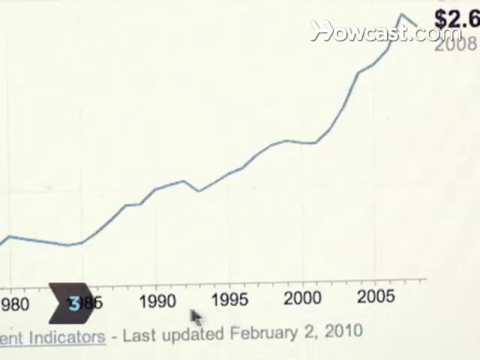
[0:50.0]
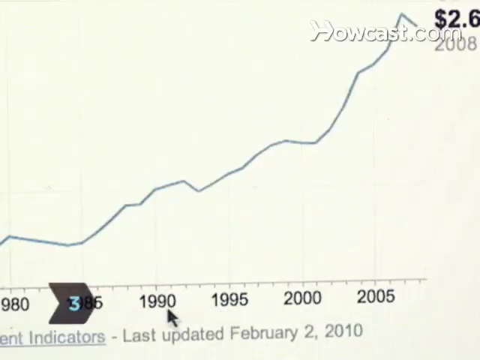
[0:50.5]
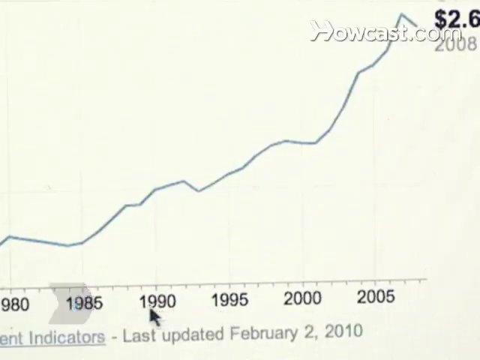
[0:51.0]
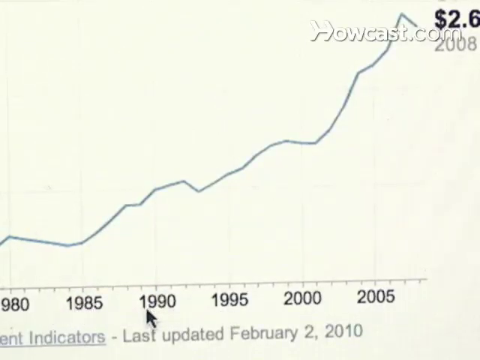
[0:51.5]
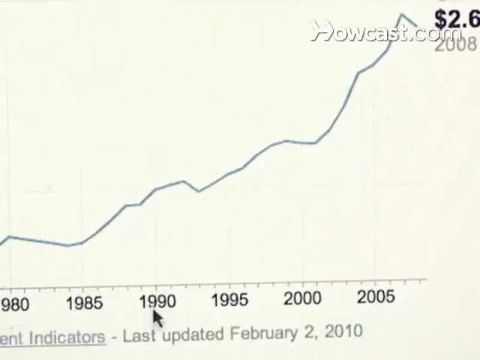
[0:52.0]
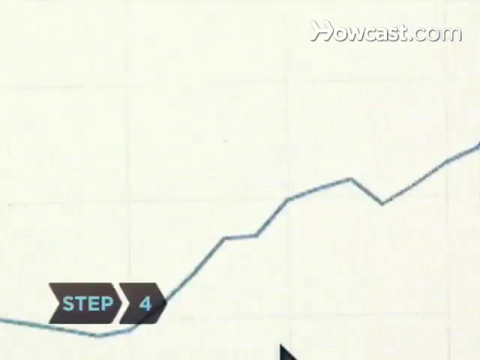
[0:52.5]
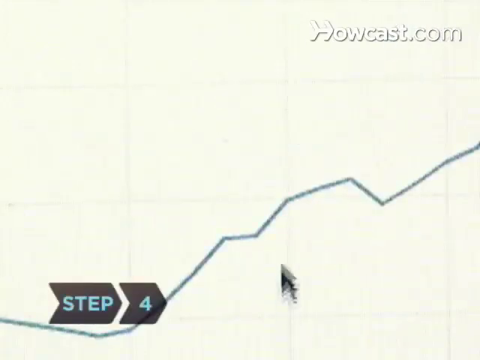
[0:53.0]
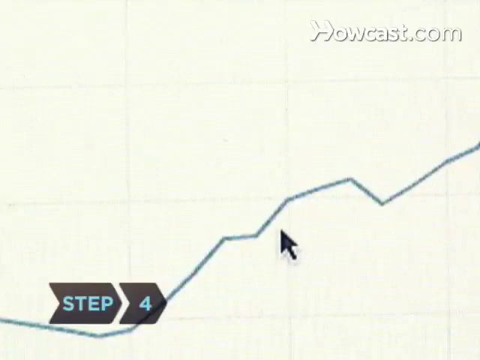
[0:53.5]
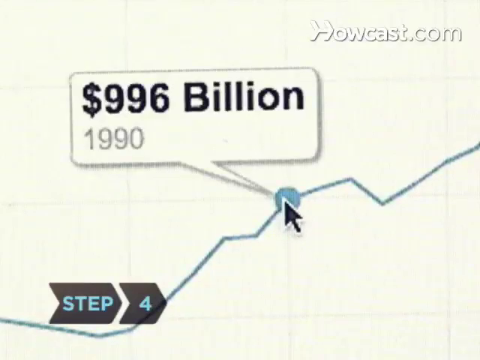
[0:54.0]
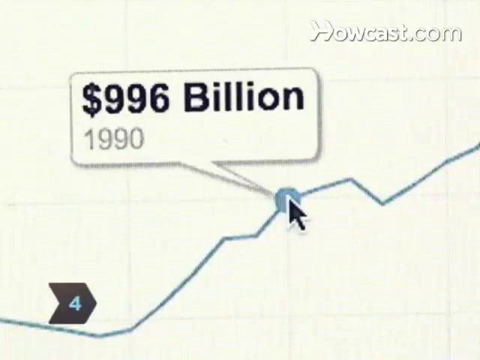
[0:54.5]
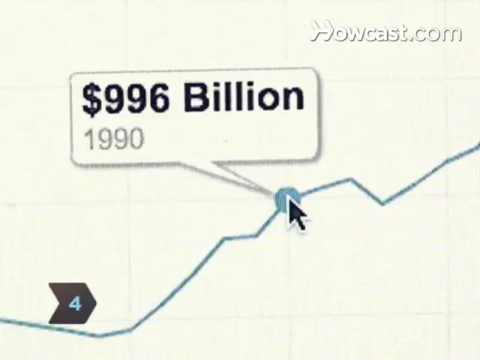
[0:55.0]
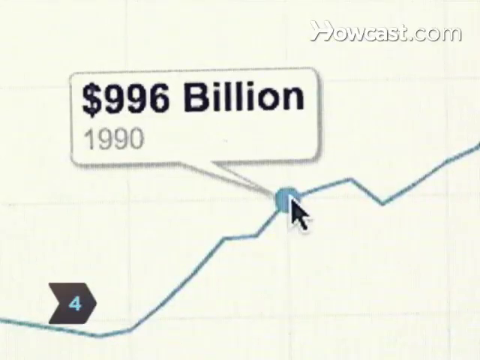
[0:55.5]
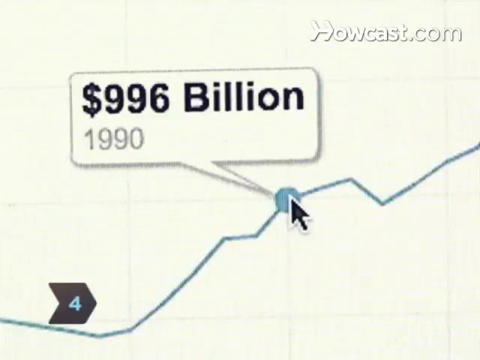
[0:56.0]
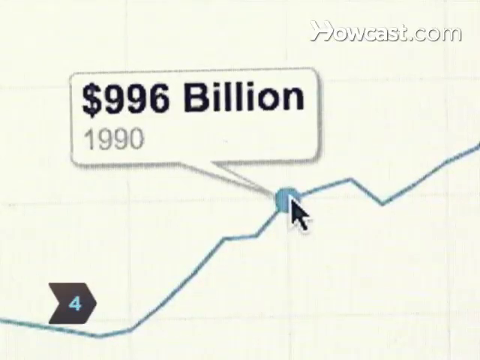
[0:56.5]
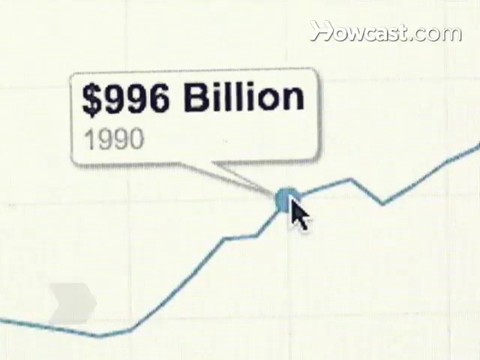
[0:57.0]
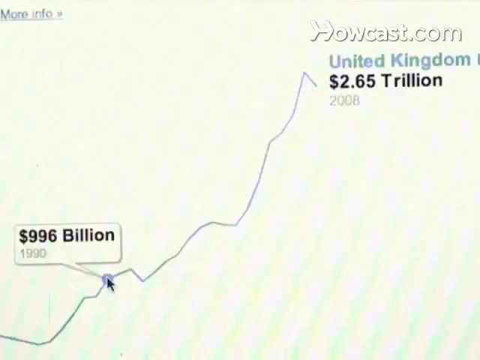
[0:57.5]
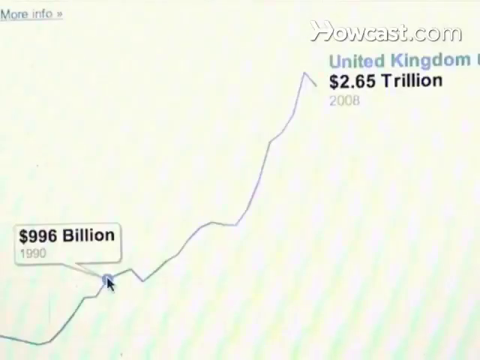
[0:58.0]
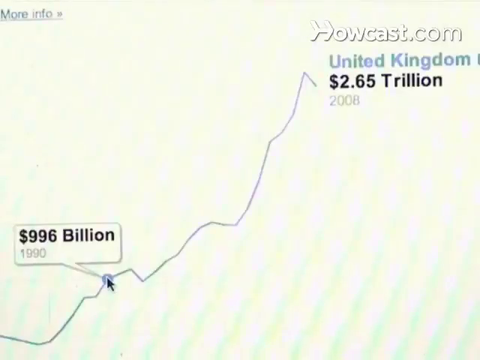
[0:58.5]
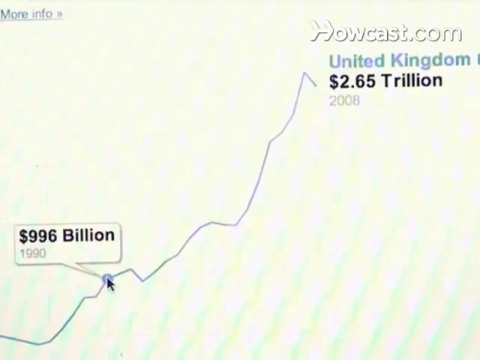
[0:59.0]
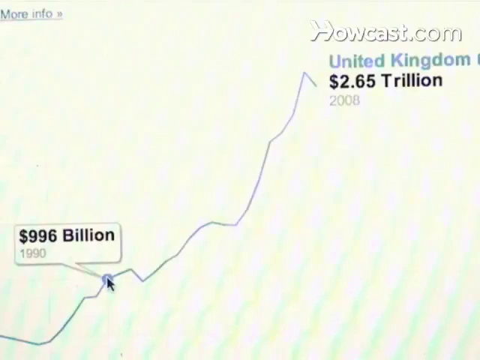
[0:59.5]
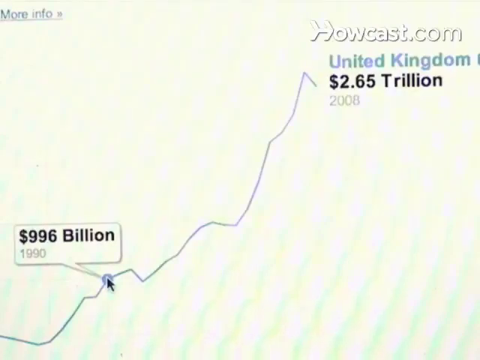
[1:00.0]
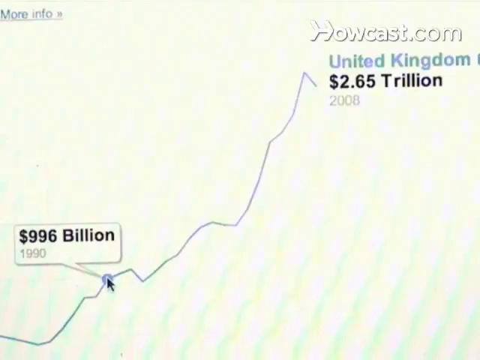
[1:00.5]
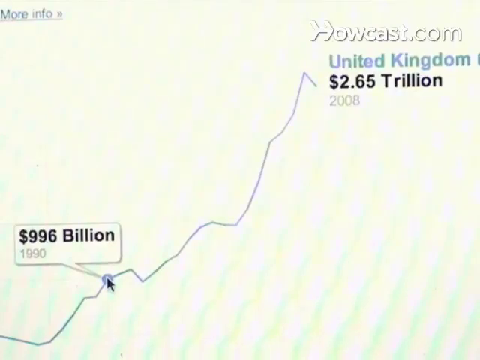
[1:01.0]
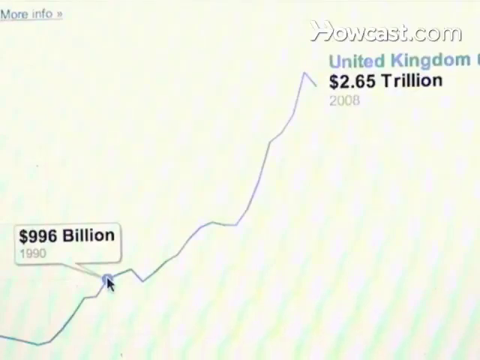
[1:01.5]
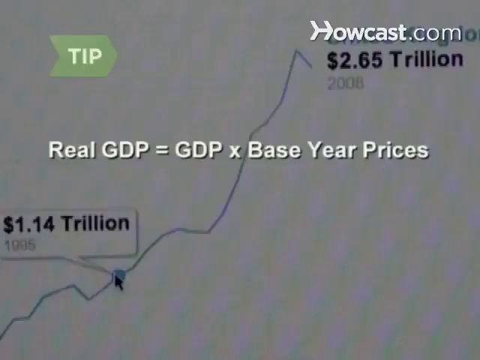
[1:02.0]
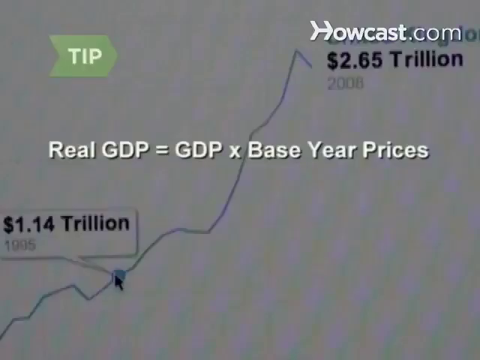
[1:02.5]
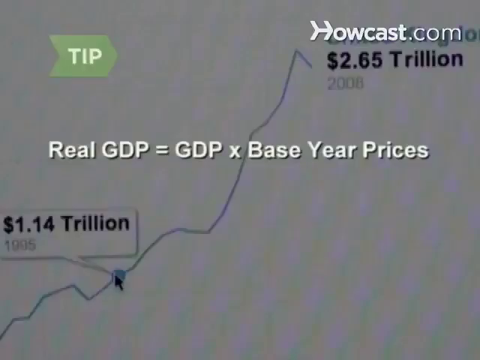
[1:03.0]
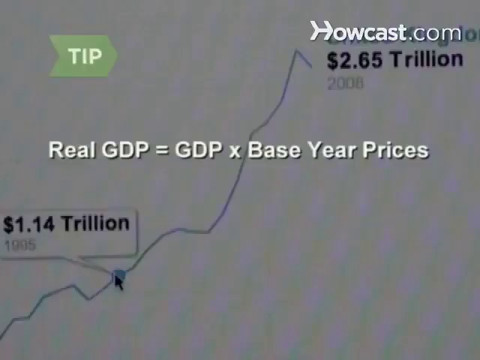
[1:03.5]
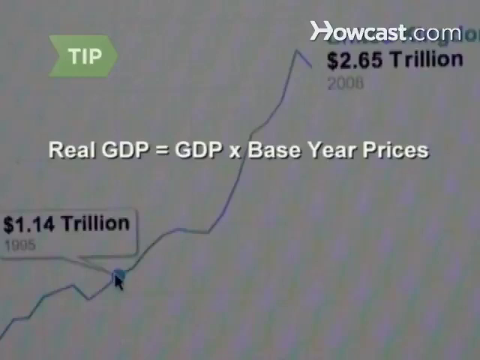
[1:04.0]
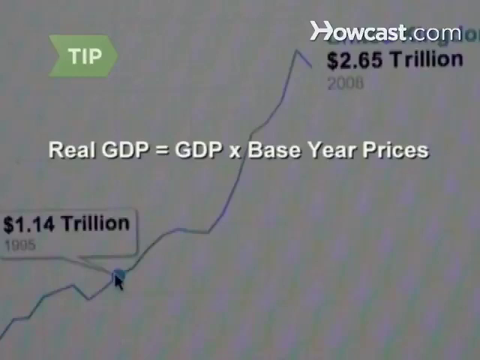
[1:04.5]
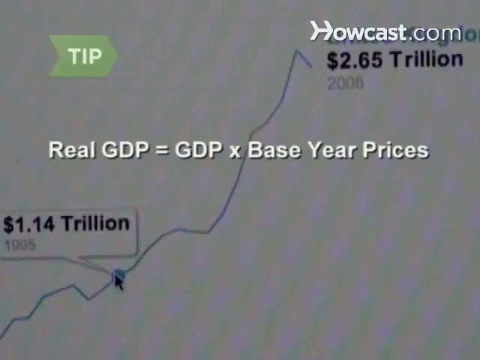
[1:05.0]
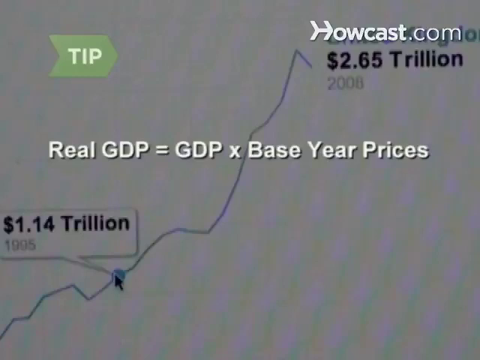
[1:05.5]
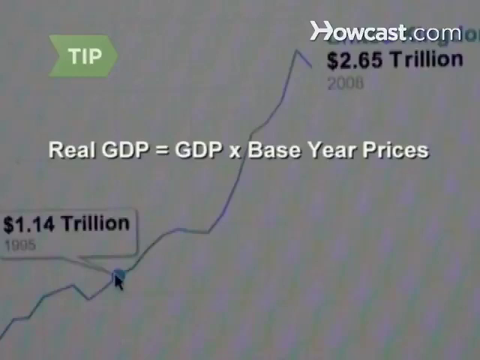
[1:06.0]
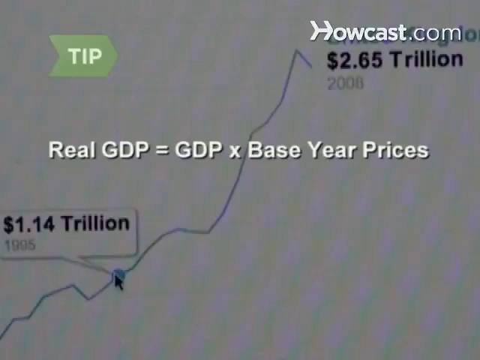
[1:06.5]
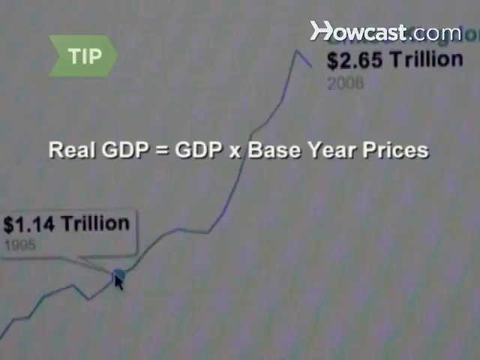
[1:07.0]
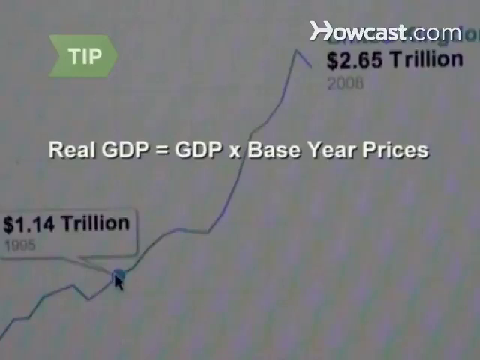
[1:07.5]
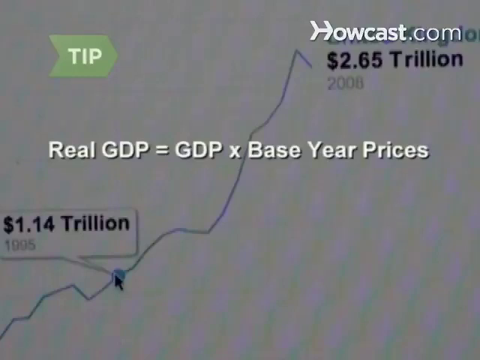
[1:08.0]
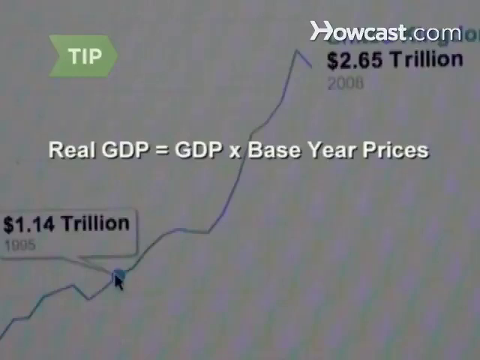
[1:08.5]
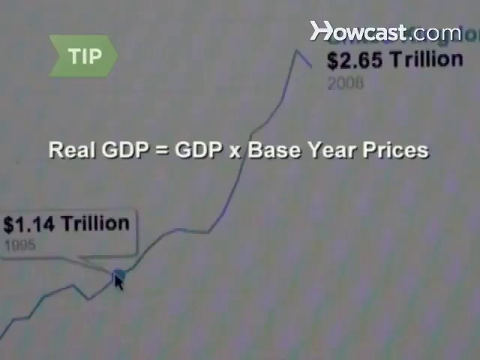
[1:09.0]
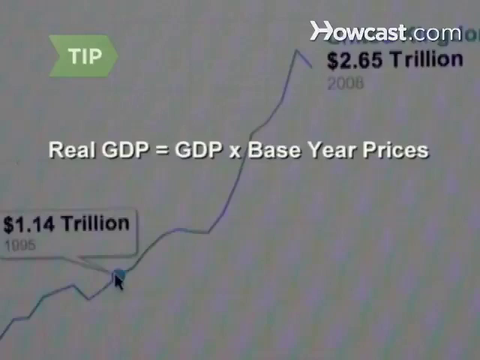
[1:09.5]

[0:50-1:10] A close-up of a computer screen has the number 3 at the bottom, marking step 3 of the process. Years run along the bottom axis, from 1980, 1985 and 1990 through to 2005, and a line on the graph rises quite steeply; this appears to be a different angle on the same graph. The video cuts to a different close-up of the screen, where the cursor taps a point on the line and a speech bubble appears reading "$996 billion 1990". It then cuts to a wide shot showing more of the graph, right to the end of the line, where it reads "United Kingdom 2.65 trillion dollars 2008". A translucent black layer covers the frame, the word "tip" appears on a green arrow, and underneath it reads "real GDP equals GDP times base year prices".